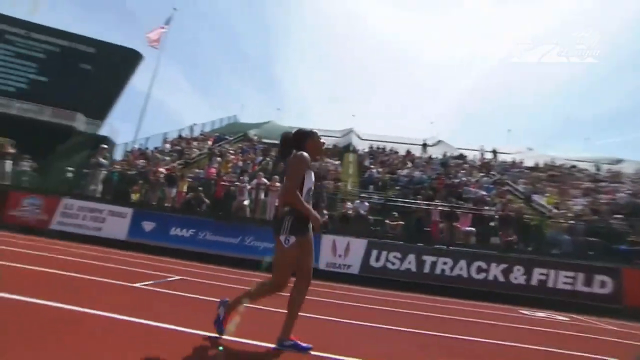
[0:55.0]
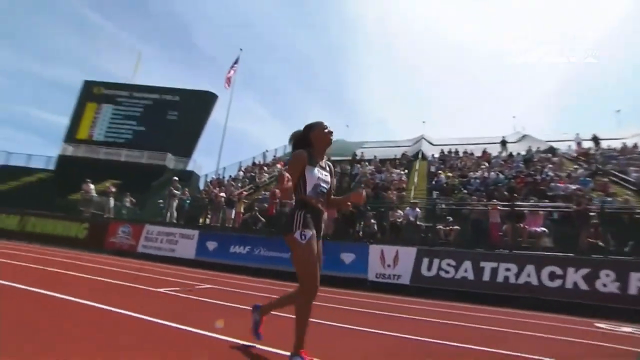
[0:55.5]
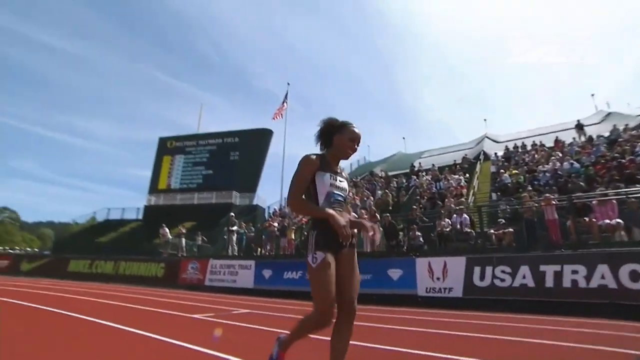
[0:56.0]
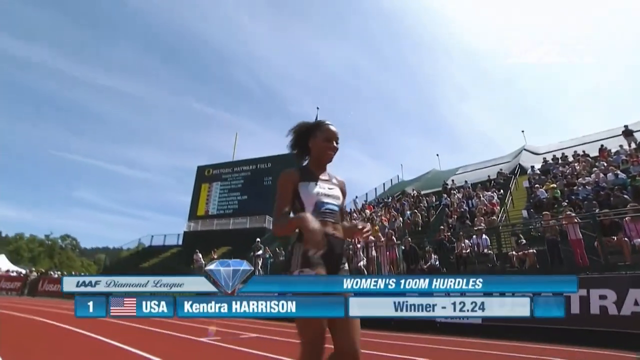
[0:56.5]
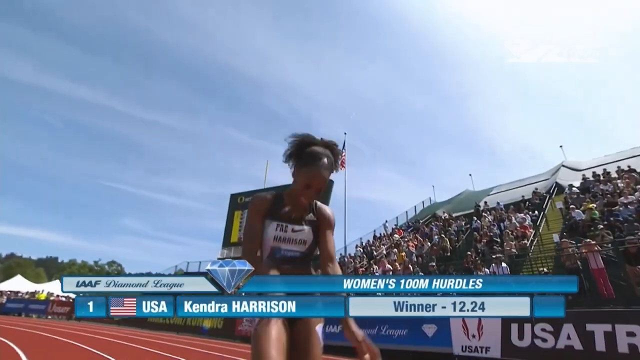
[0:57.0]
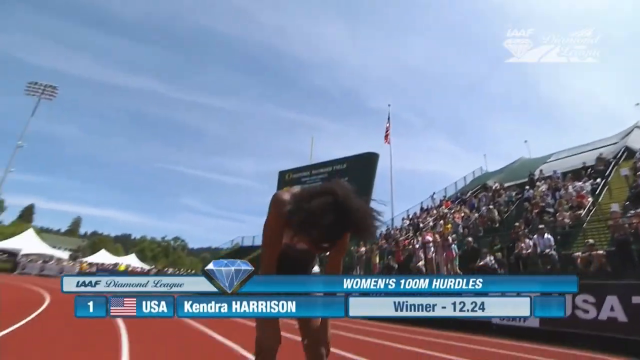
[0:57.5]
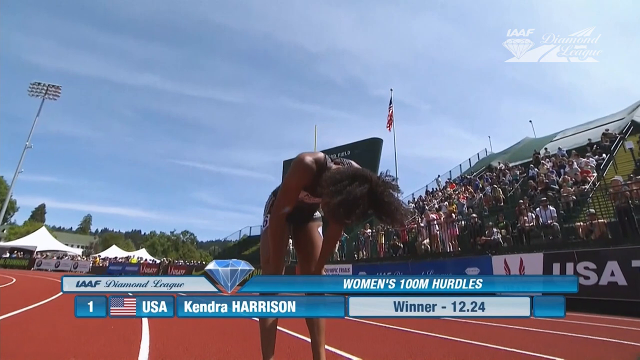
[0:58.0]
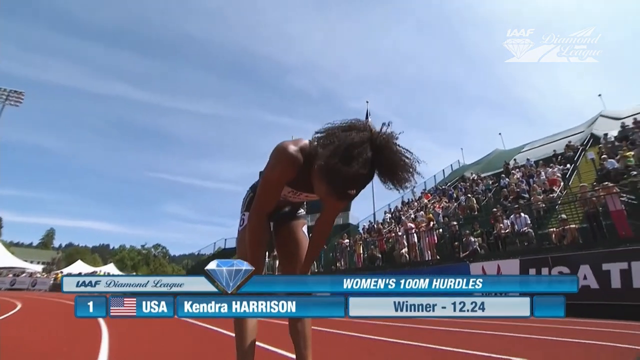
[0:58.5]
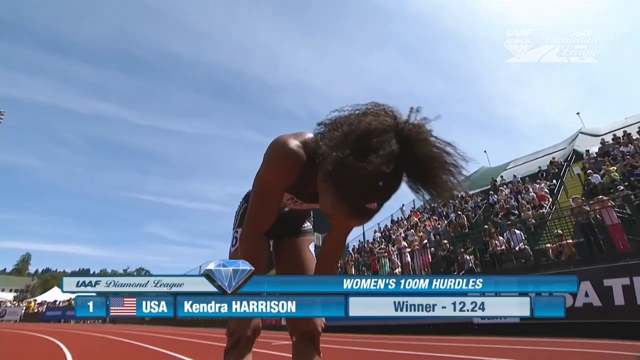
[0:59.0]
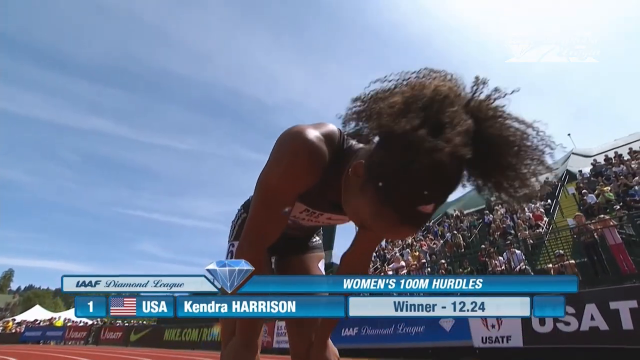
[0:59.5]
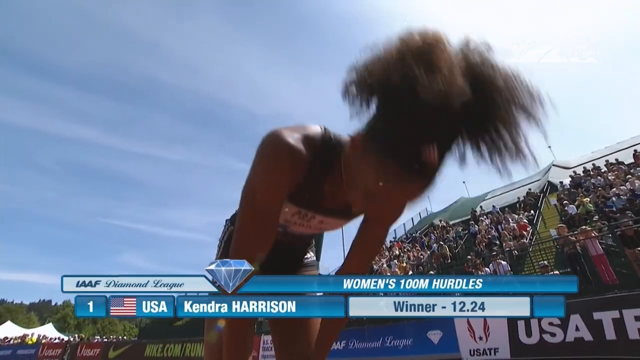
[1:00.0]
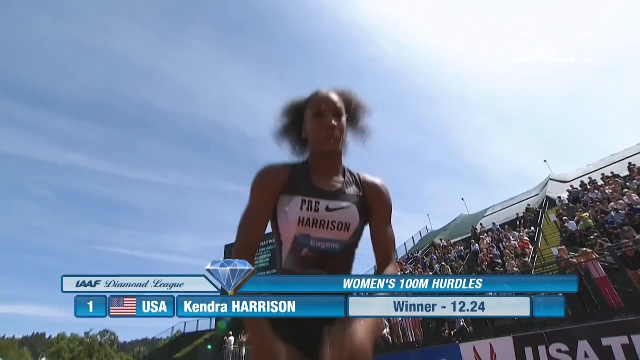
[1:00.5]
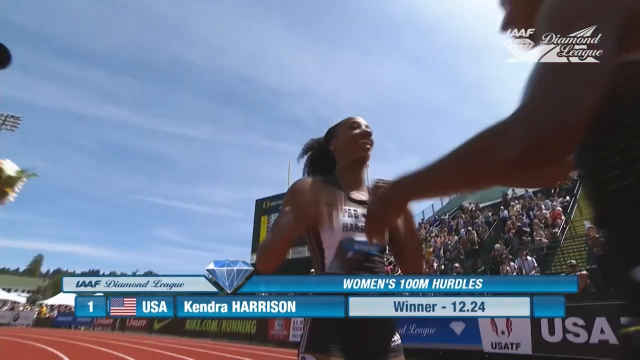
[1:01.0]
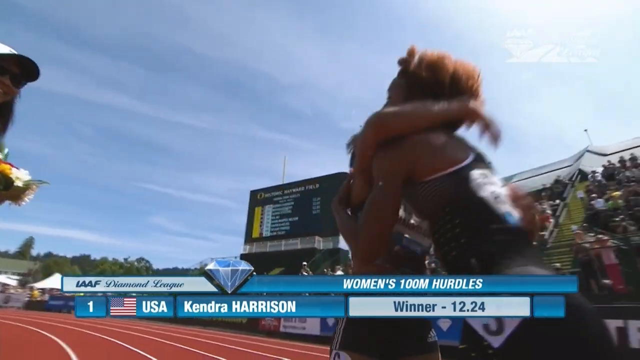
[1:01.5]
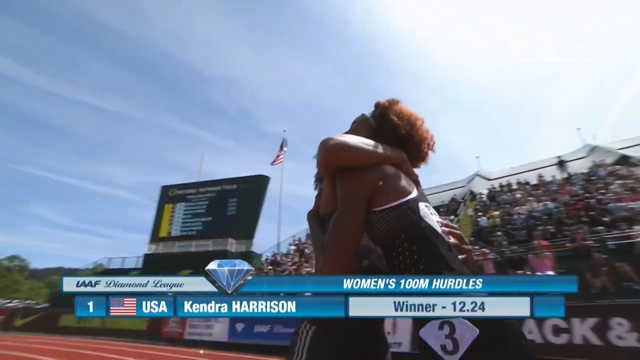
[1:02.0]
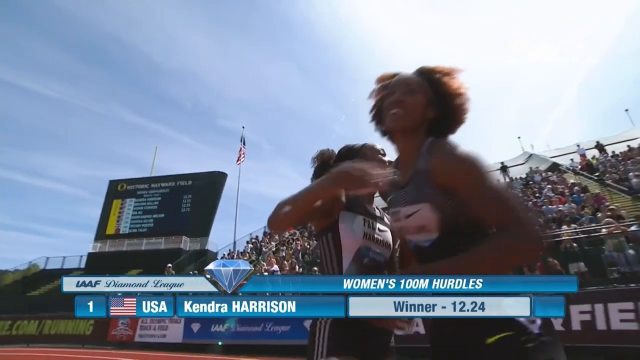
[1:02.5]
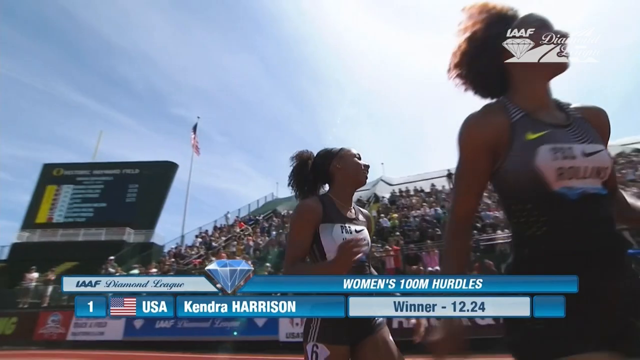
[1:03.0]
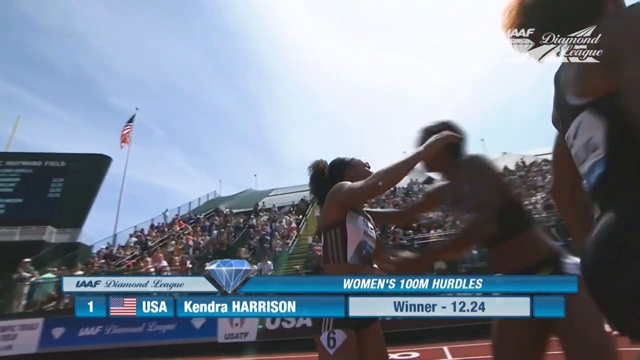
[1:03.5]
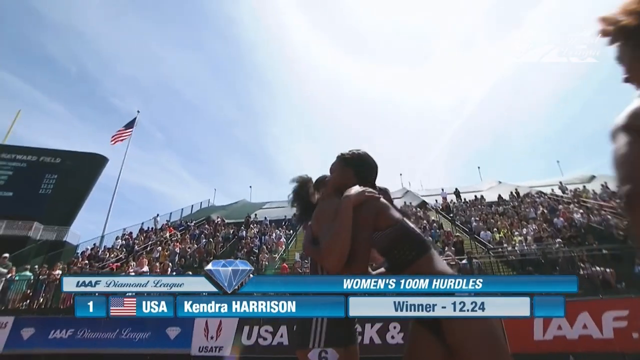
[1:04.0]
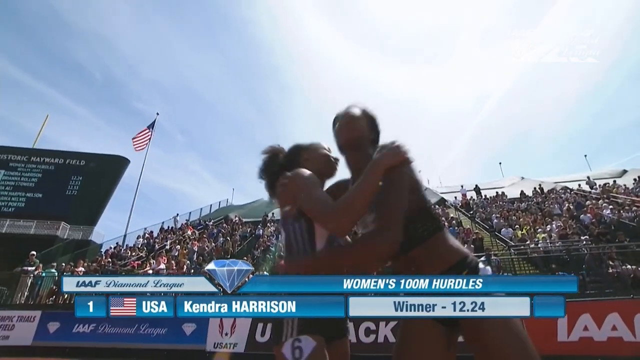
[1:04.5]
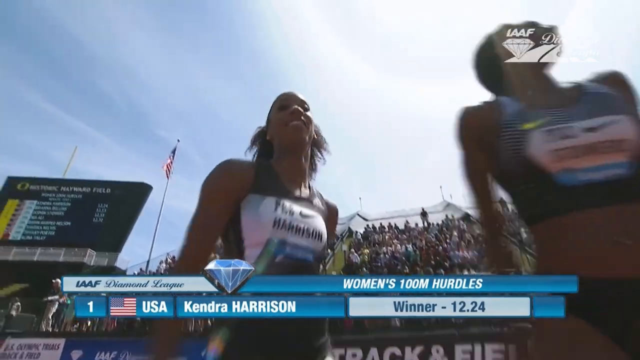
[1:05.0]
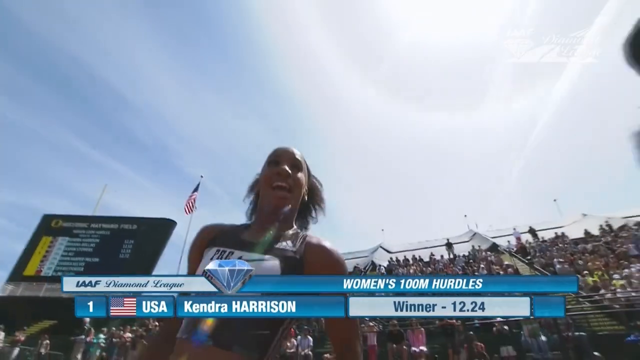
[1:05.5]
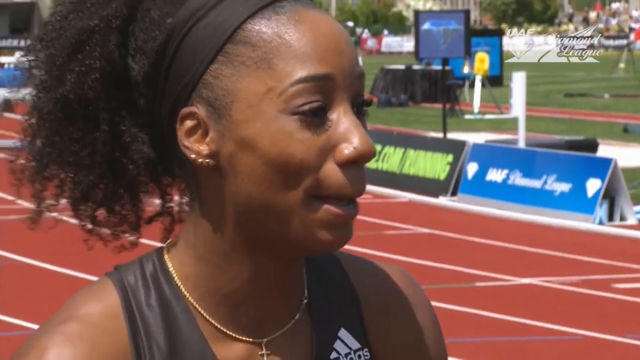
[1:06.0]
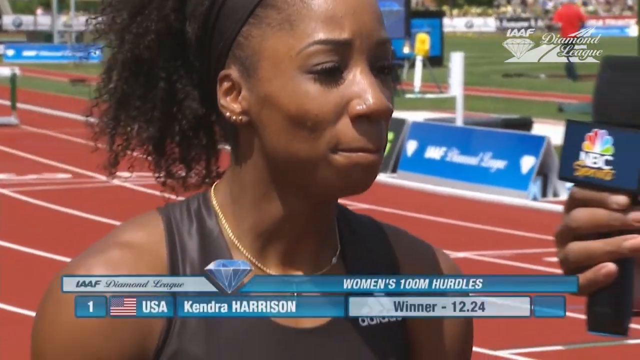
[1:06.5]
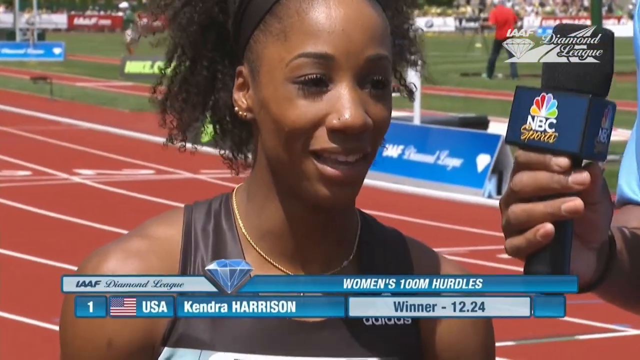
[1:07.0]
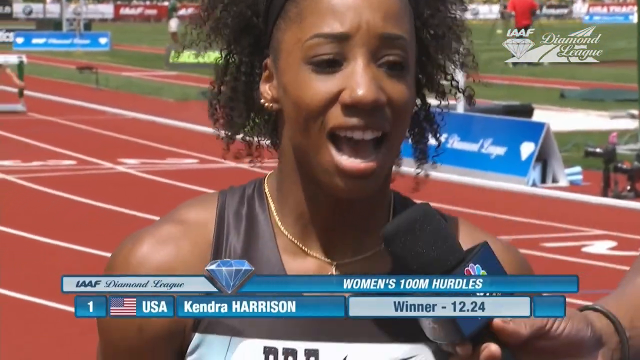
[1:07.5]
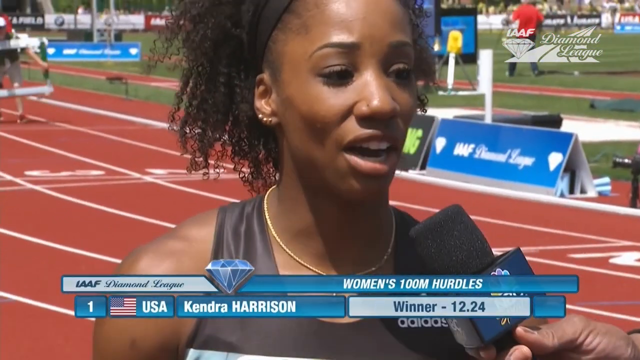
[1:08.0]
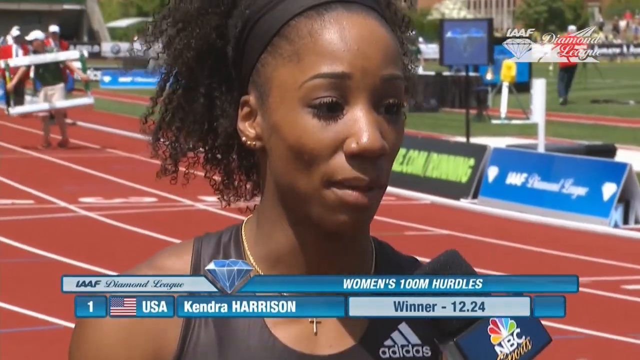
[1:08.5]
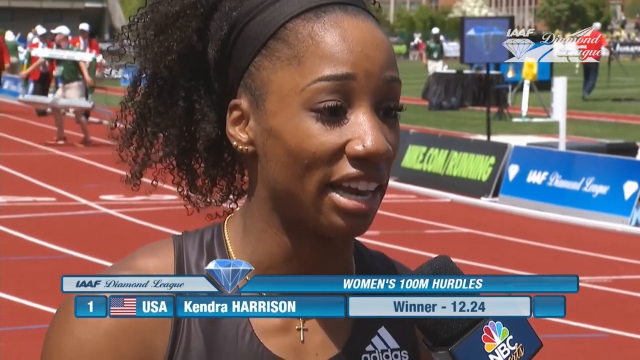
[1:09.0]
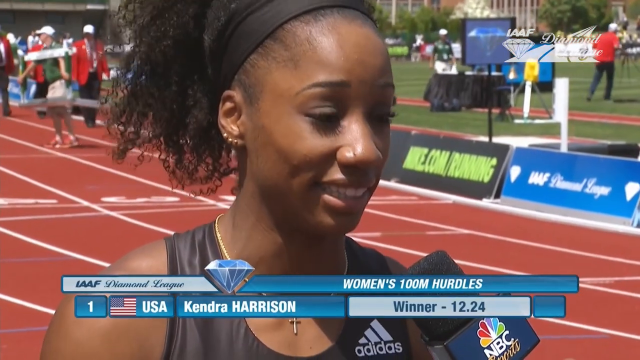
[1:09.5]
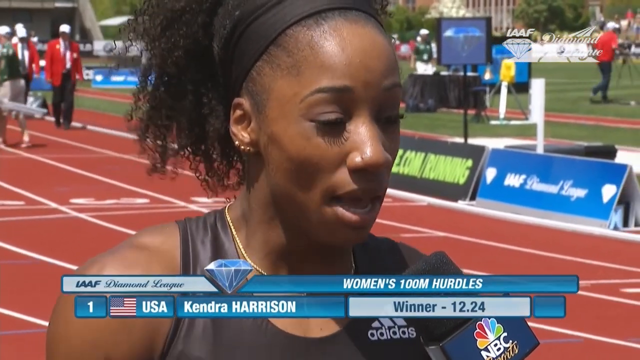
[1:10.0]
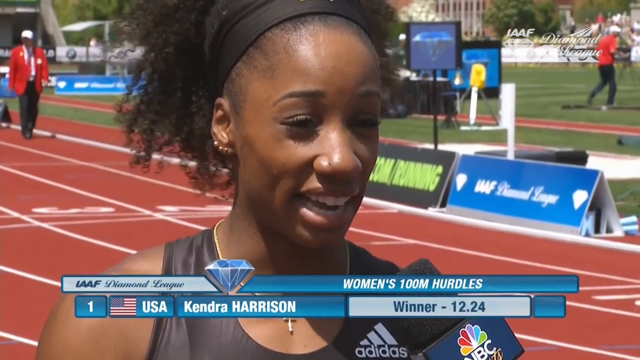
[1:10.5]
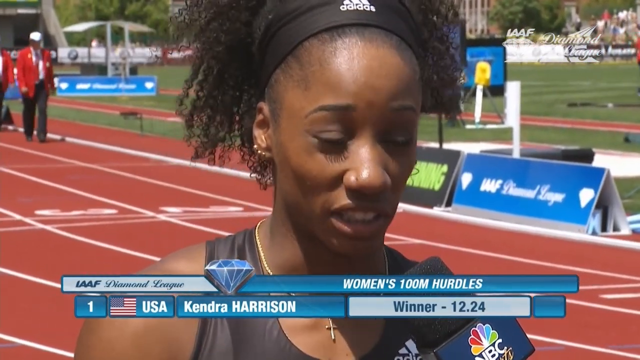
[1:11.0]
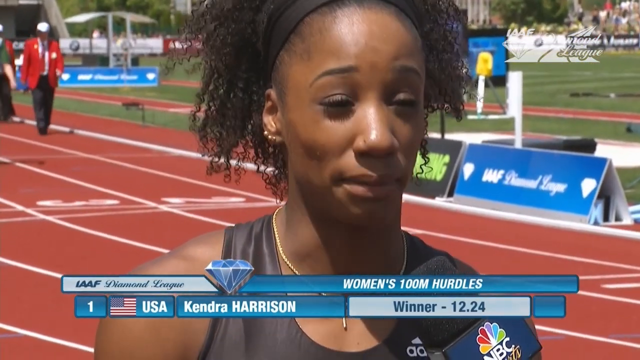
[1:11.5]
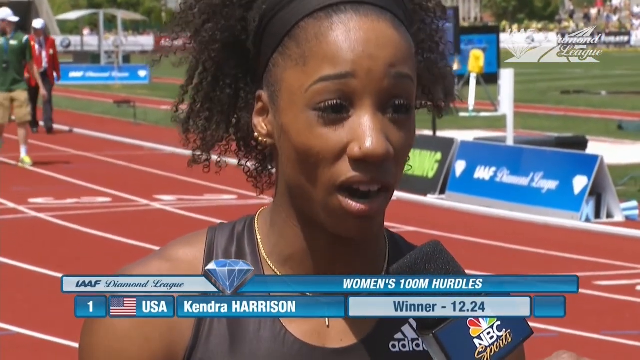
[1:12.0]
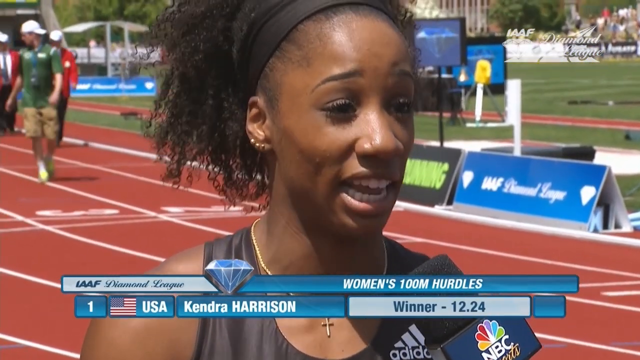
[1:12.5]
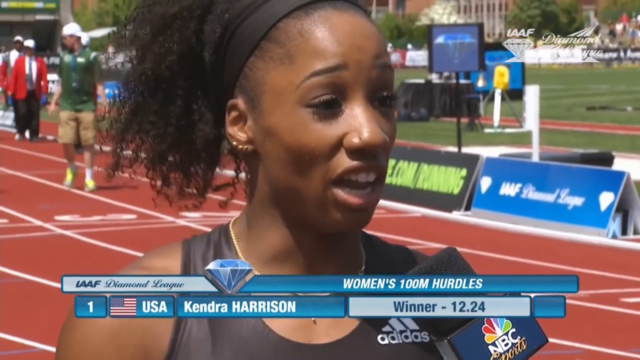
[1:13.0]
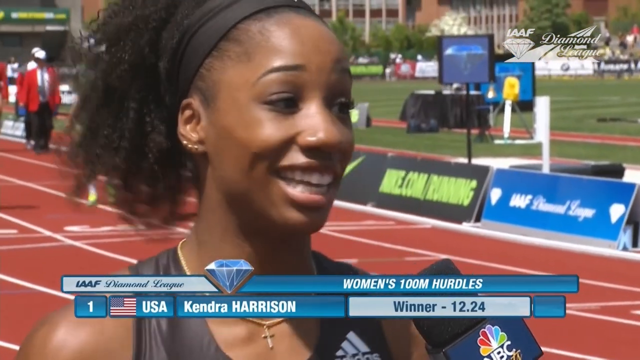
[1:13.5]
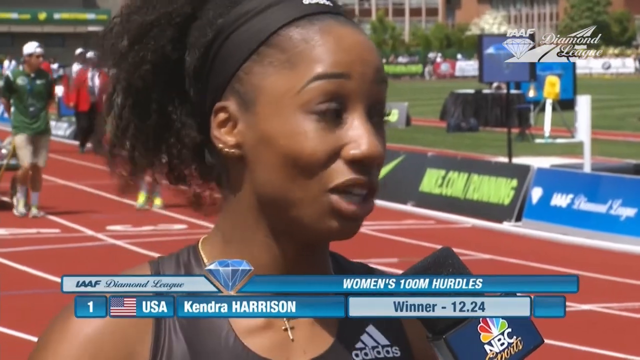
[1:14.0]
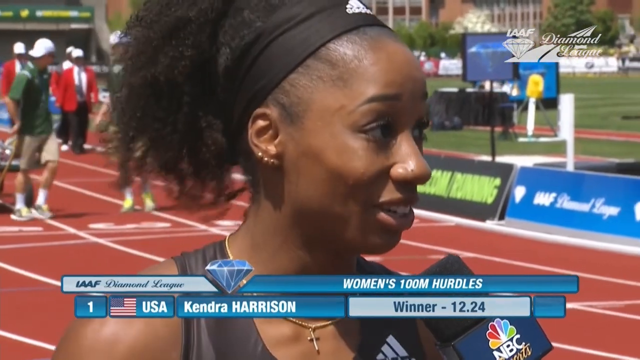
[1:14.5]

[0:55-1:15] The winner is interviewed on camera. Her time is shown as 12.24; she represents the United States, the event is the Women's 100 Meter Hurdles, and her name is Kendra Harrison. The graphic reads "IAAF Diamond League". As she celebrates, some of the other runners come up to congratulate her, hugging and embracing her. The interviewer has an NBC Sports logo on his microphone.